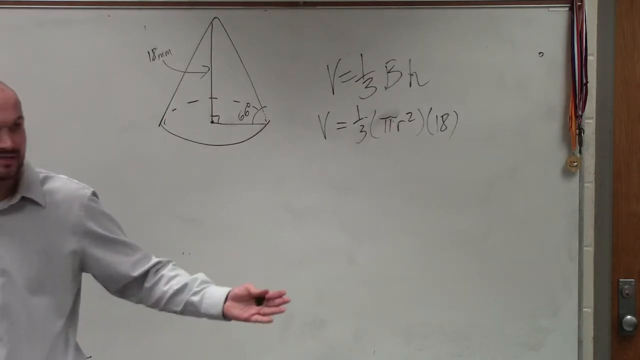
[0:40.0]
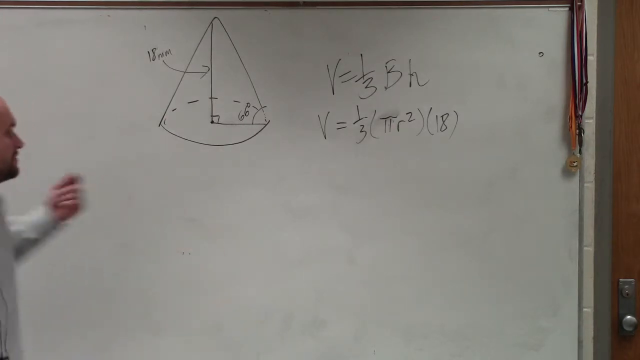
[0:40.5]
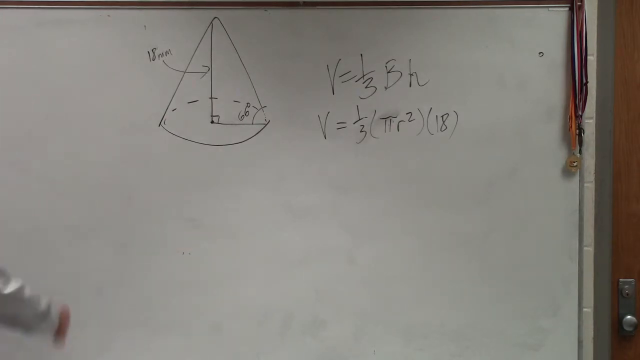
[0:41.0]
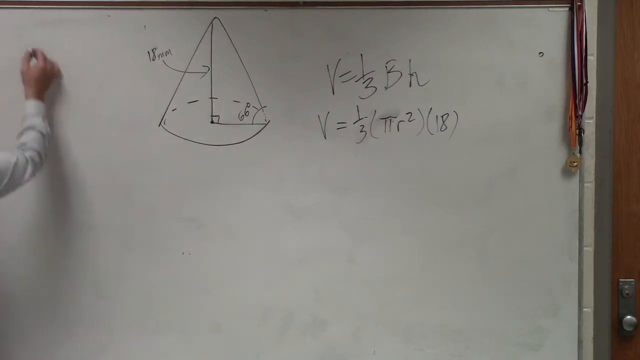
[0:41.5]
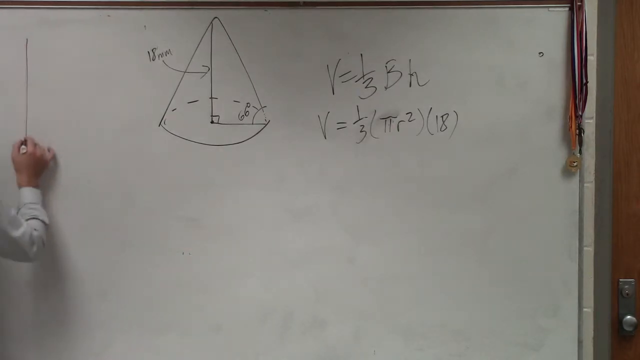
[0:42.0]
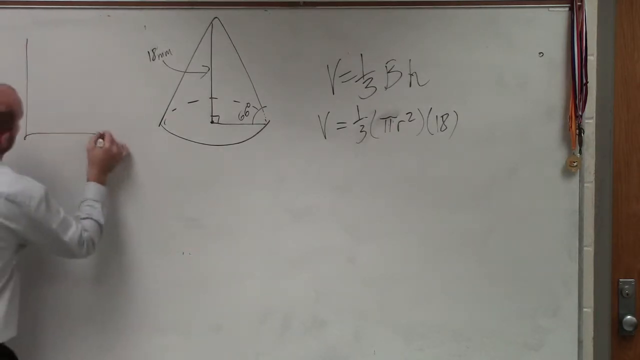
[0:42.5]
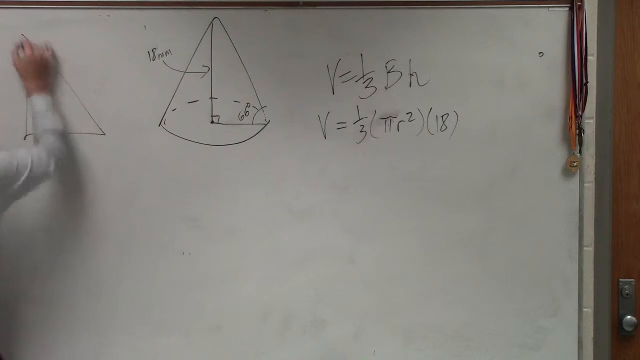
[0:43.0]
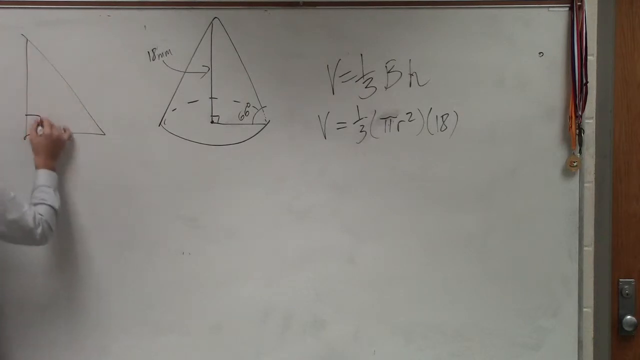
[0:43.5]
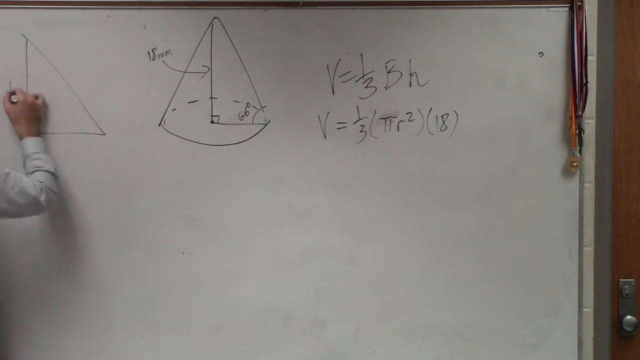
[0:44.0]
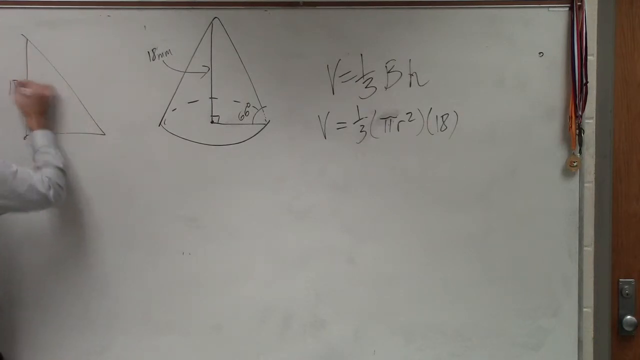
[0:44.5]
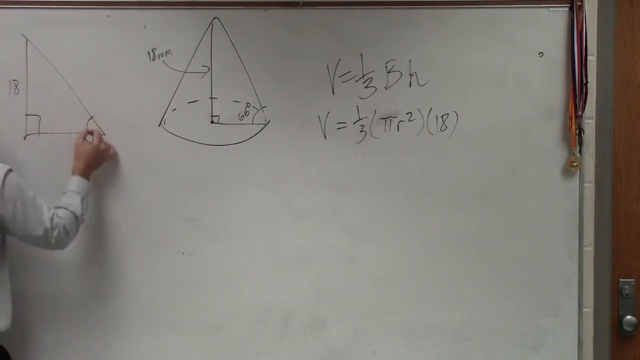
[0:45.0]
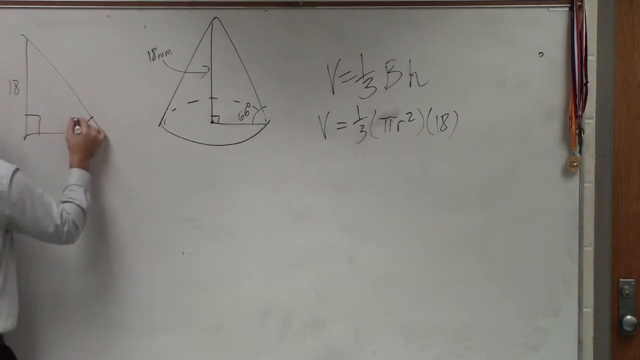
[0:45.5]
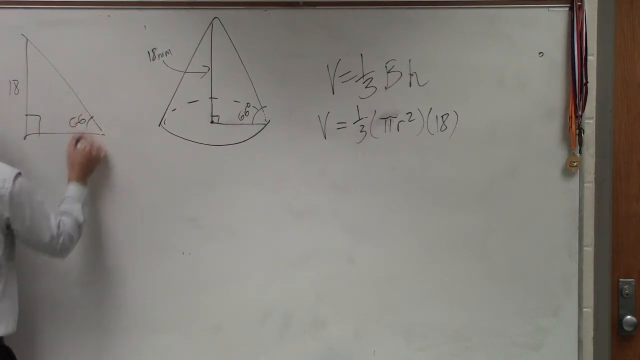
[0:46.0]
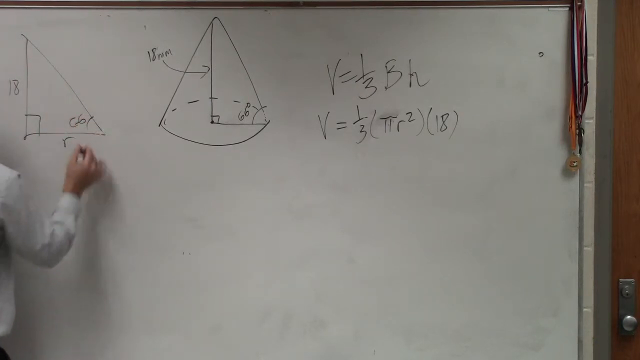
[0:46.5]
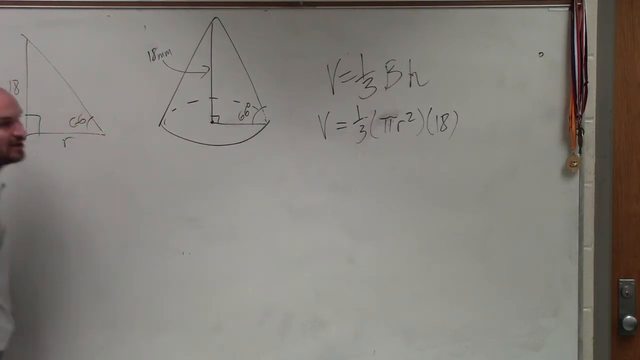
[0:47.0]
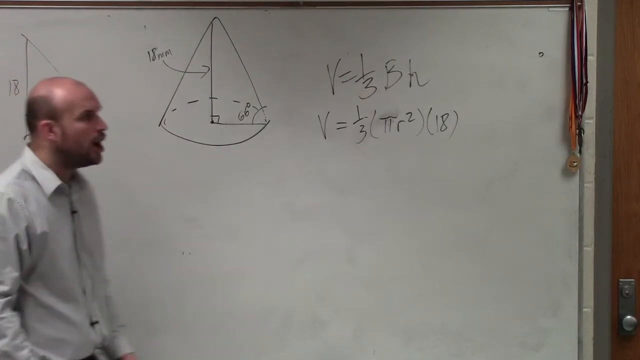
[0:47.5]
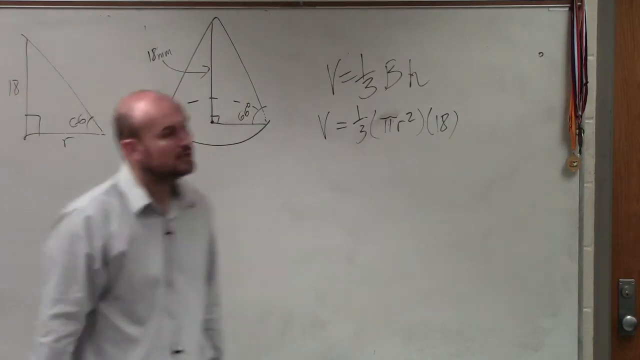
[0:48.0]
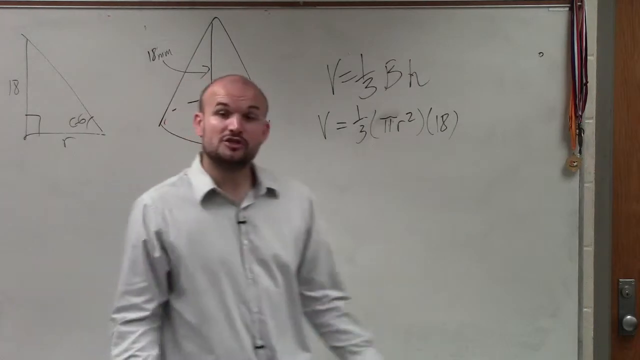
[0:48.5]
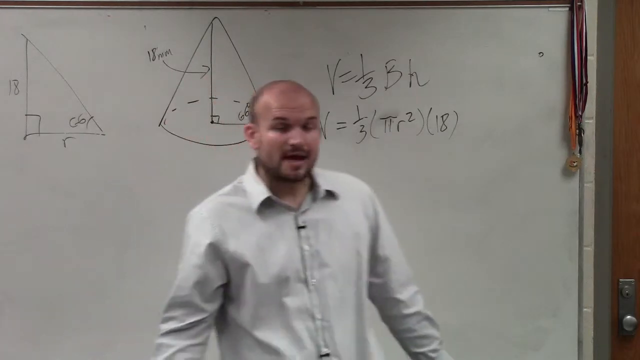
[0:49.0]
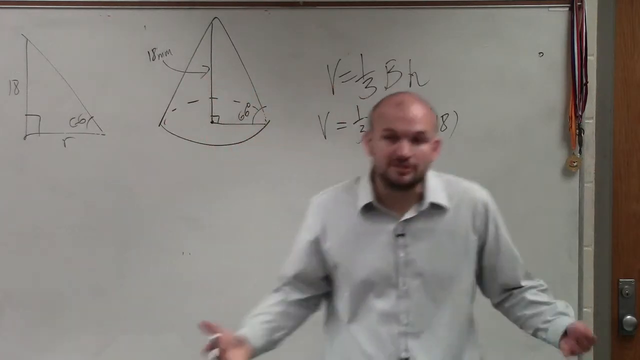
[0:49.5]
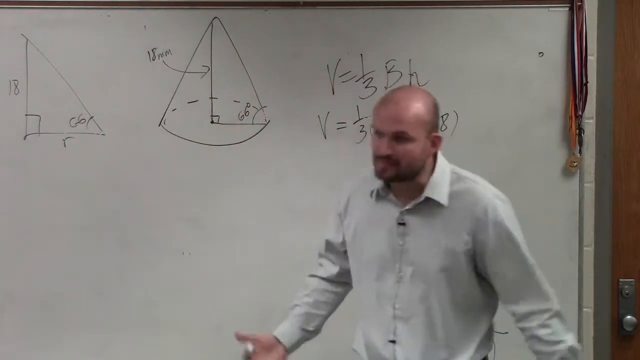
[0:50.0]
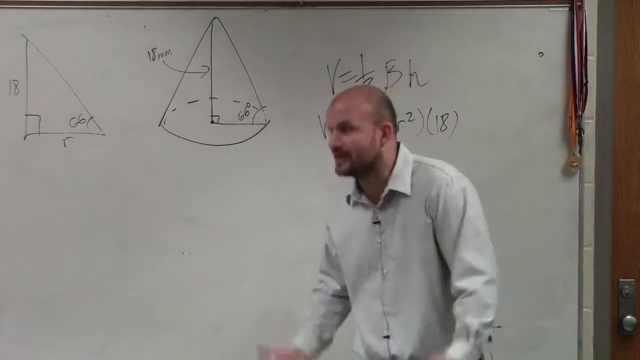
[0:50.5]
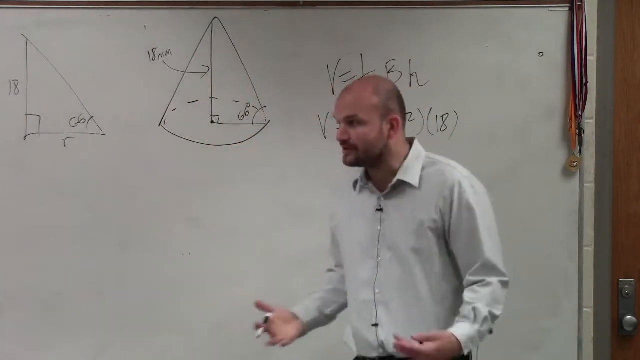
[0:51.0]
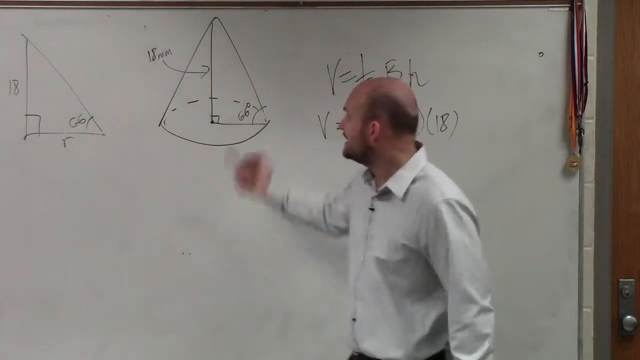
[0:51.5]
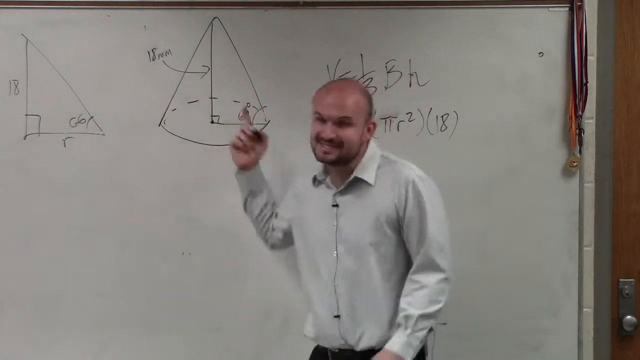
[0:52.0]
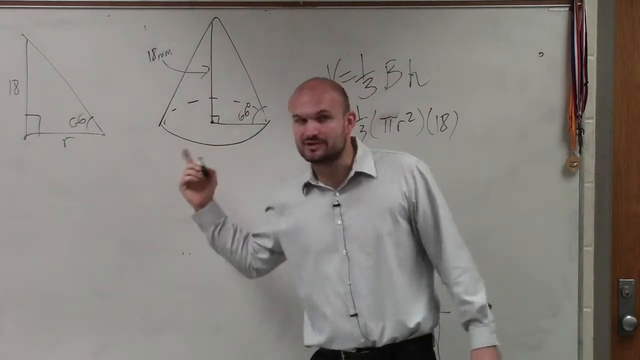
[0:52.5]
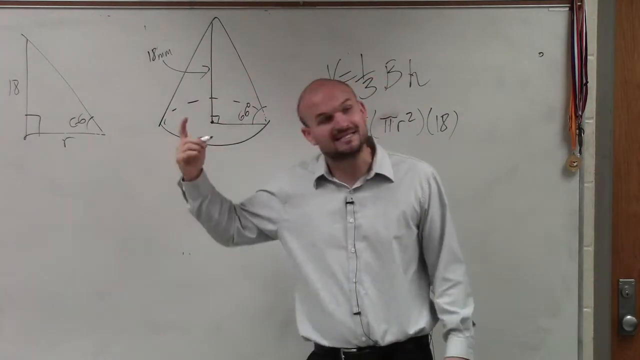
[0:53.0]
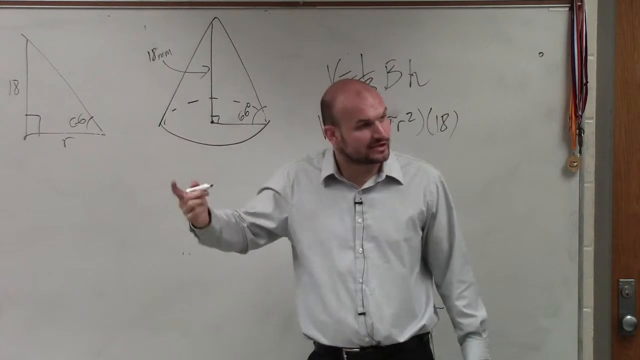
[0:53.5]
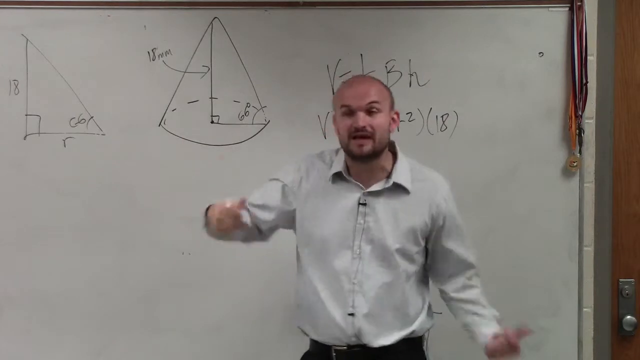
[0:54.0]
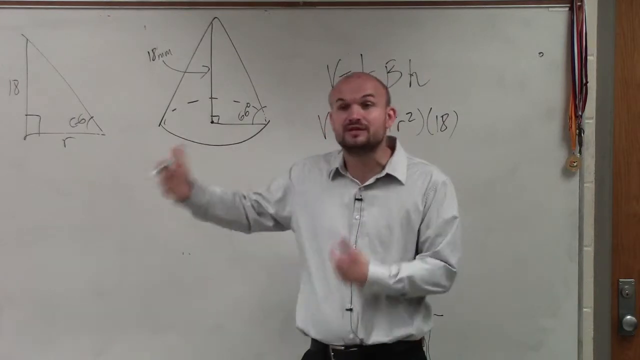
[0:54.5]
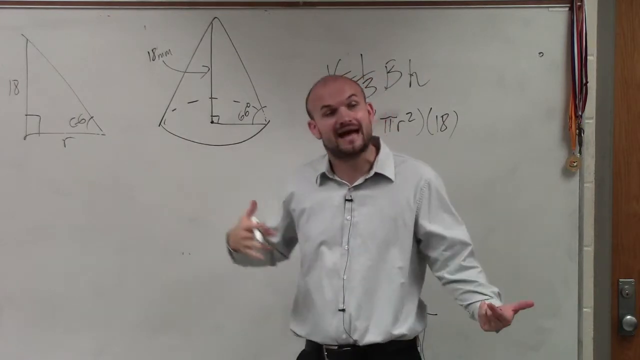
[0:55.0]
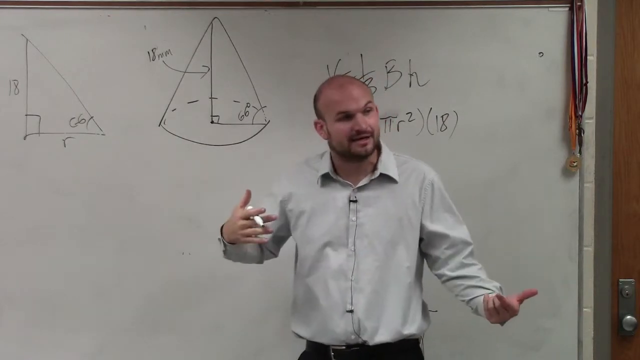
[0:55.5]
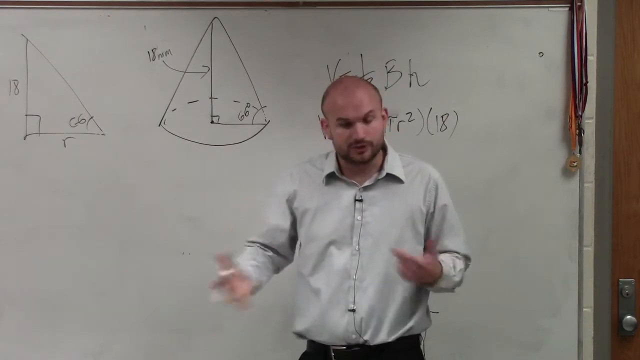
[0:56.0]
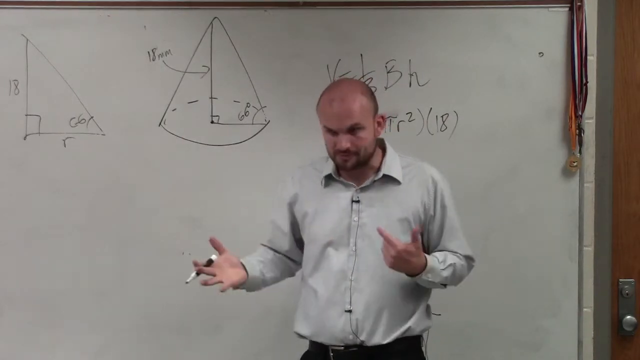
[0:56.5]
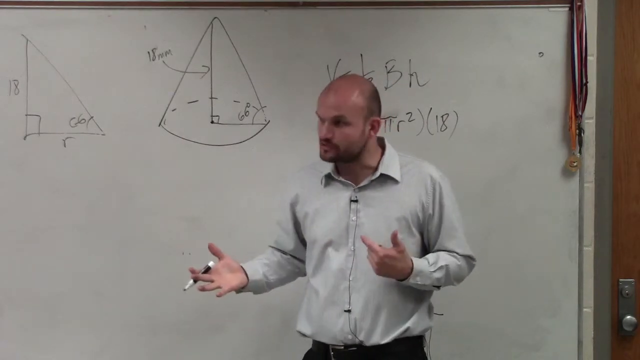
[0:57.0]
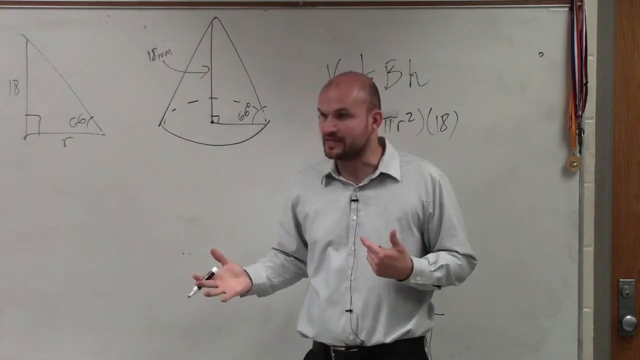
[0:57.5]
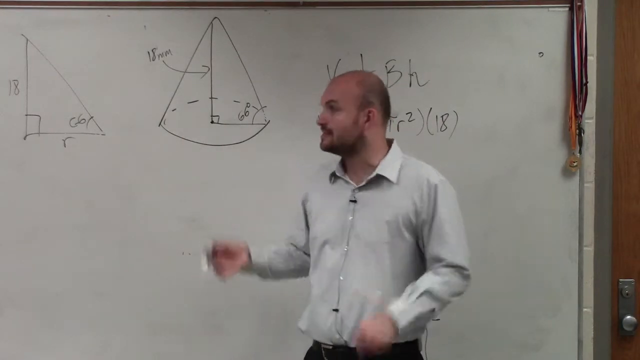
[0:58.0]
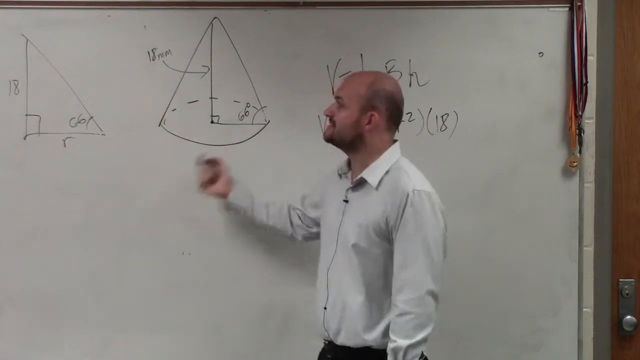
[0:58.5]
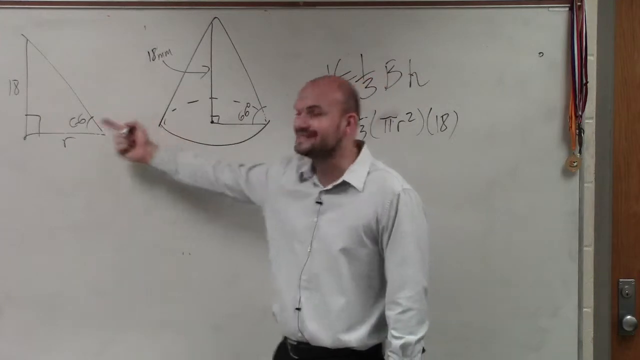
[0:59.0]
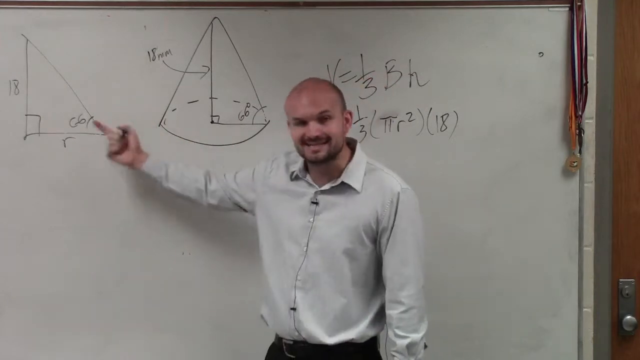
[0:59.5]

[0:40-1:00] The man has drawn a triangle on the far left-hand side of the big whiteboard he stands in front of. He labels the left side of the triangle 18, draws a small square at the bottom to indicate a right angle, marks the other angle 66, and puts the letter R at the bottom of the triangle. He is right-handed and writes with his right hand; while he writes, most of him is out of frame and only his right arm is visible. He then faces the class, gesturing a lot with his hands and pointing with his right index finger at the right triangle he has just drawn. His face is very animated: he raises his eyebrows and moves his arms back and forth. He is still using the black marker on the whiteboard, and at the end he is still addressing the class.